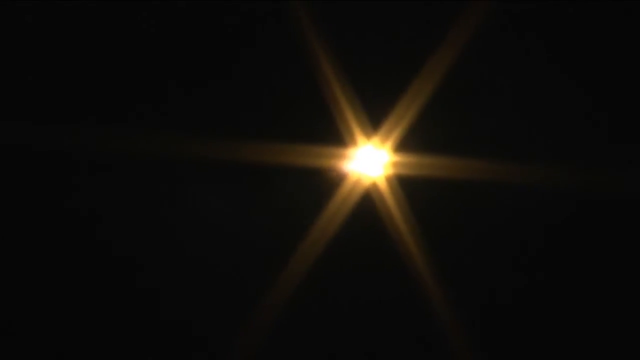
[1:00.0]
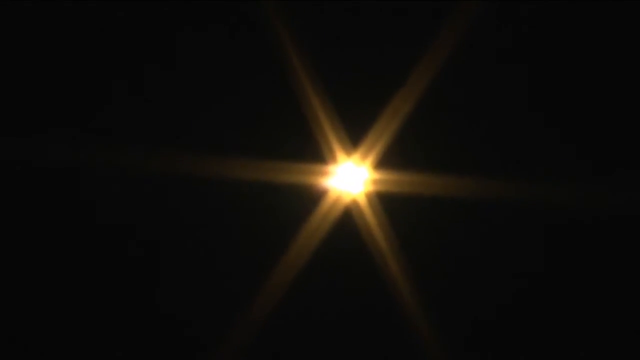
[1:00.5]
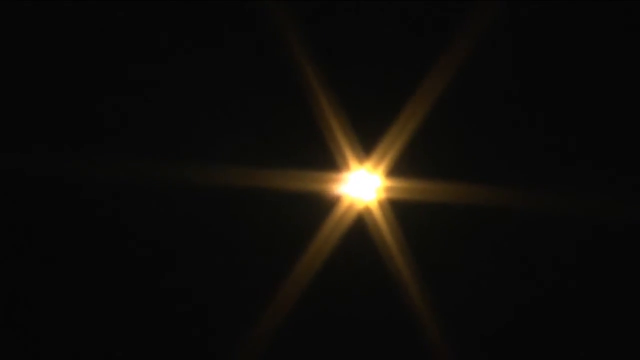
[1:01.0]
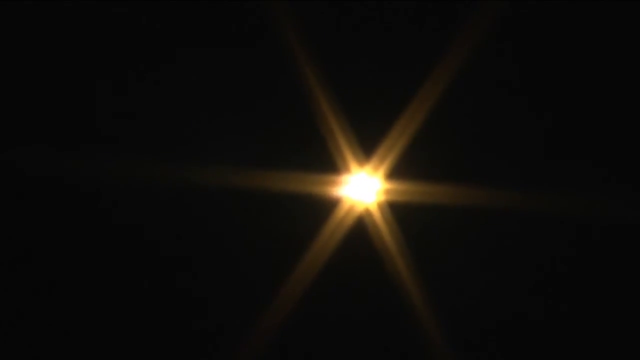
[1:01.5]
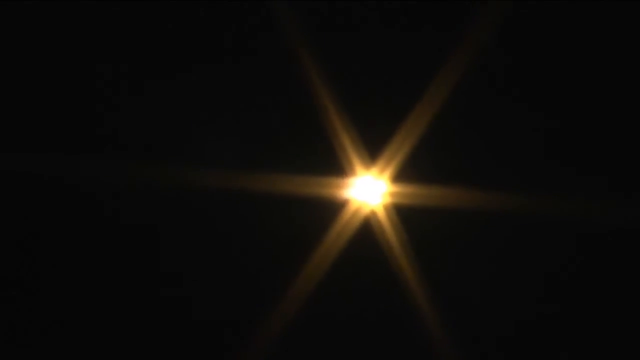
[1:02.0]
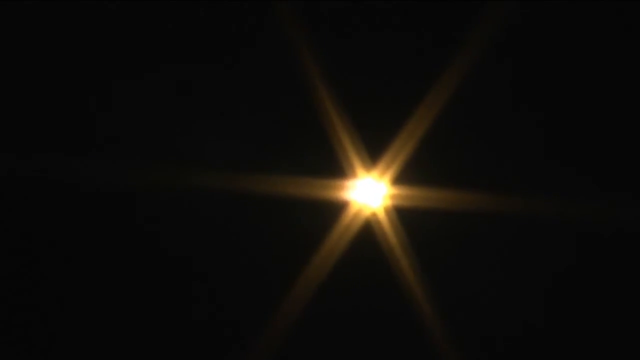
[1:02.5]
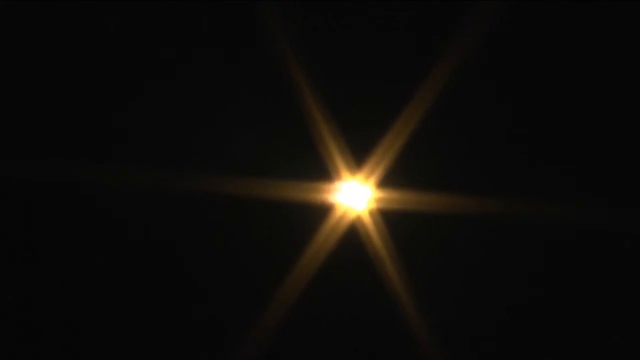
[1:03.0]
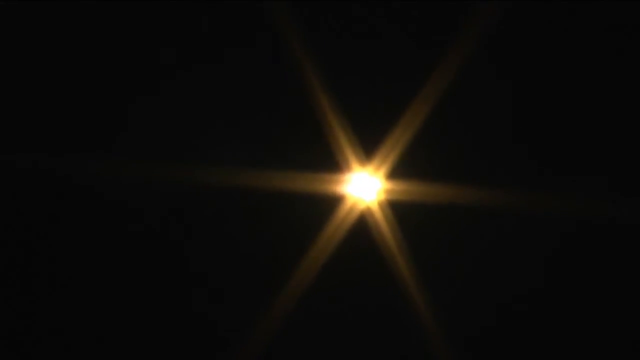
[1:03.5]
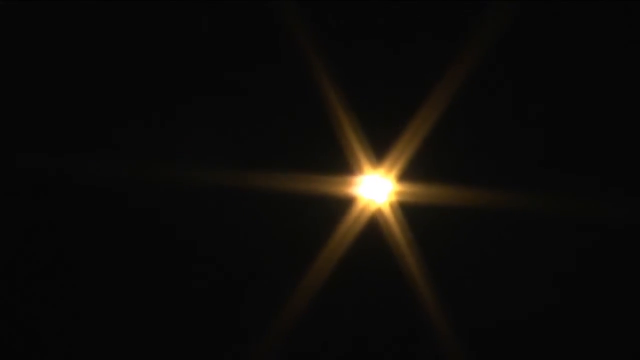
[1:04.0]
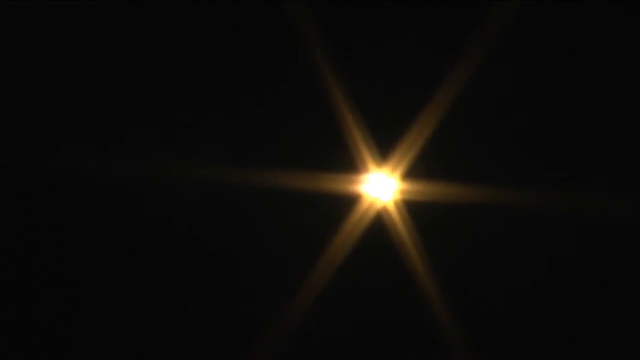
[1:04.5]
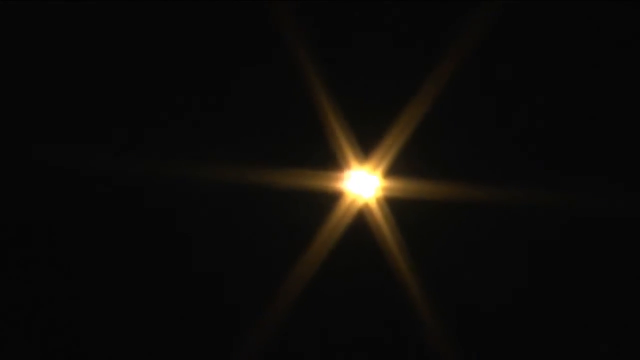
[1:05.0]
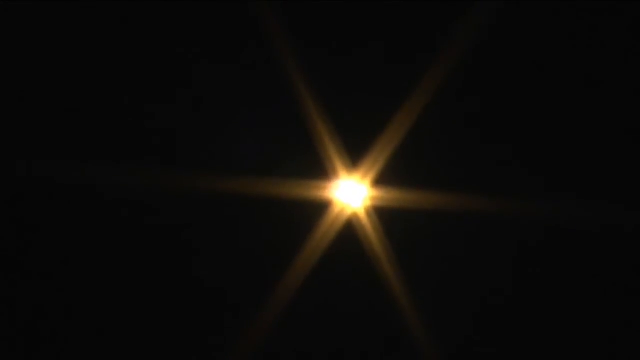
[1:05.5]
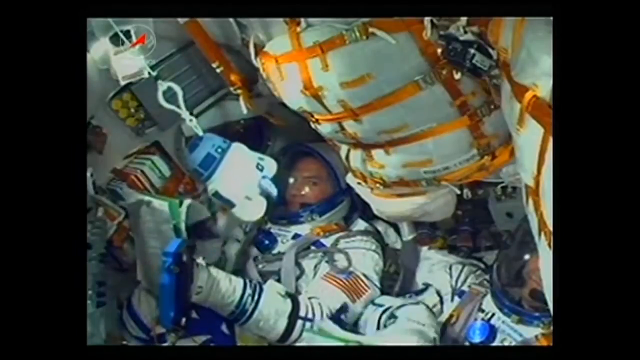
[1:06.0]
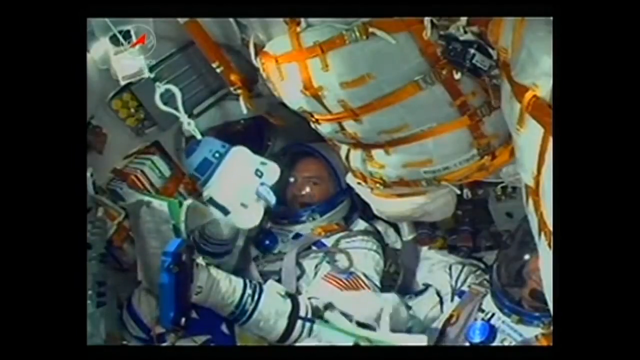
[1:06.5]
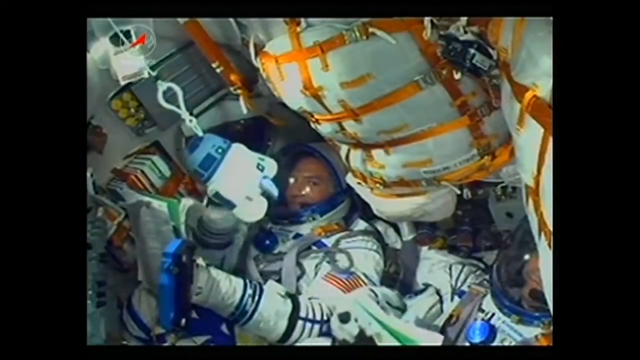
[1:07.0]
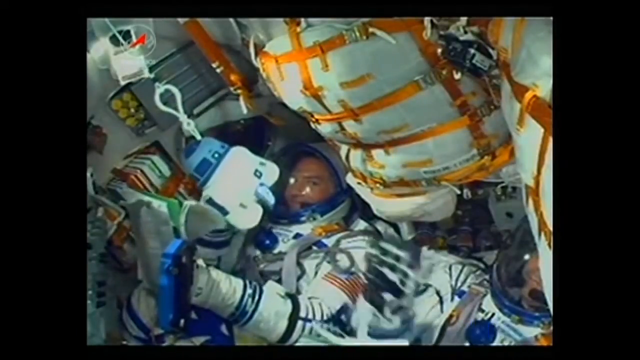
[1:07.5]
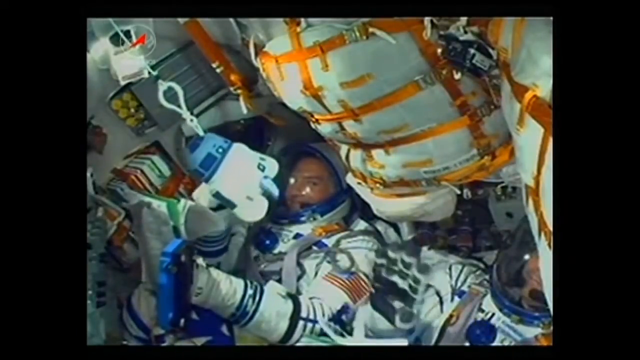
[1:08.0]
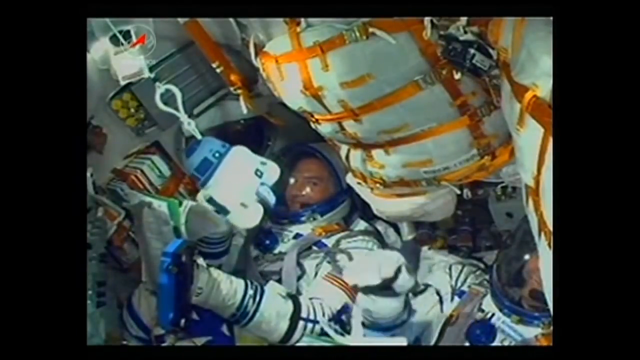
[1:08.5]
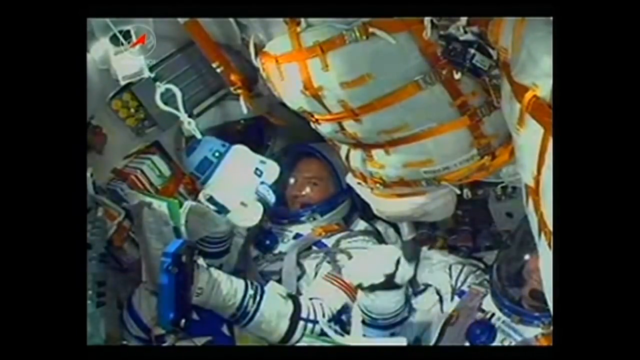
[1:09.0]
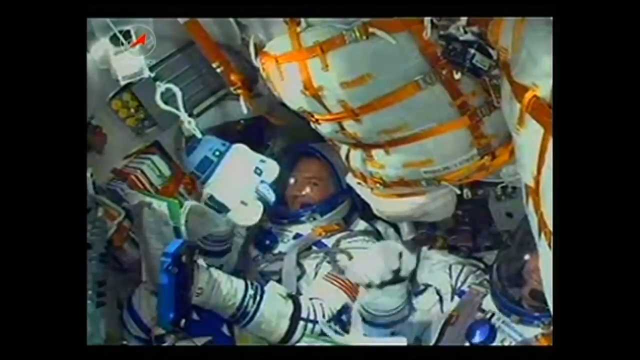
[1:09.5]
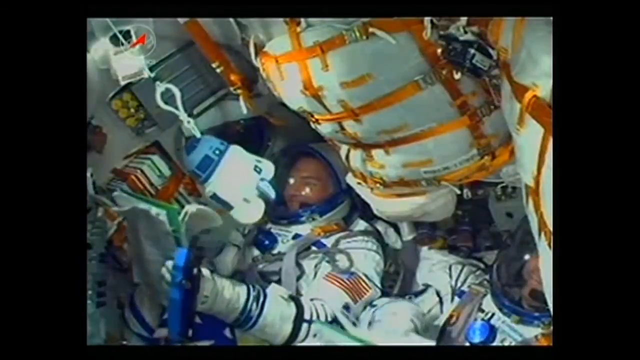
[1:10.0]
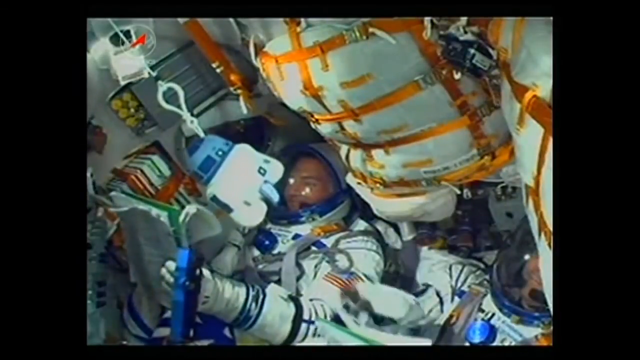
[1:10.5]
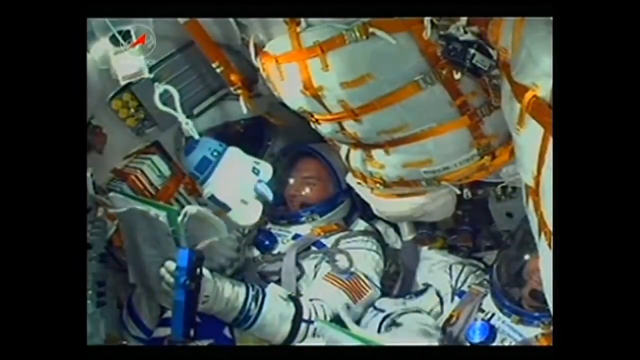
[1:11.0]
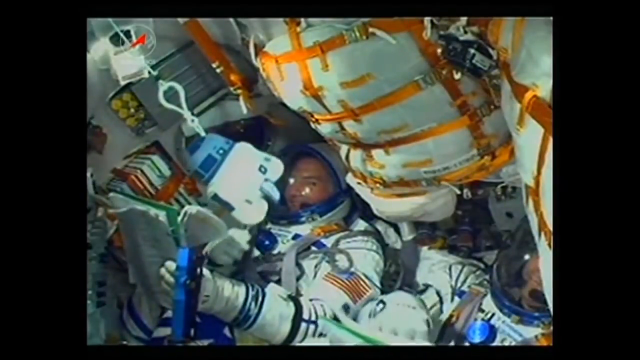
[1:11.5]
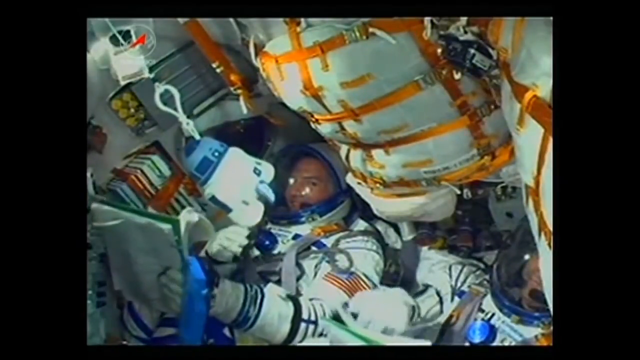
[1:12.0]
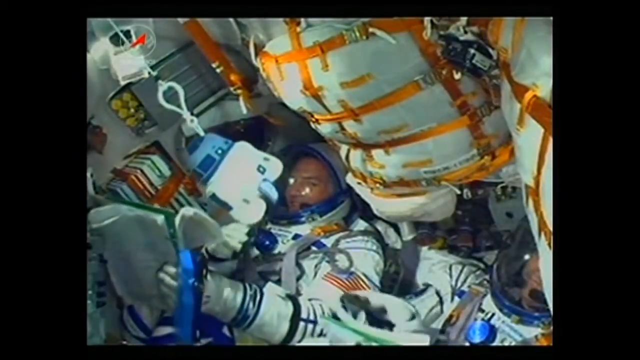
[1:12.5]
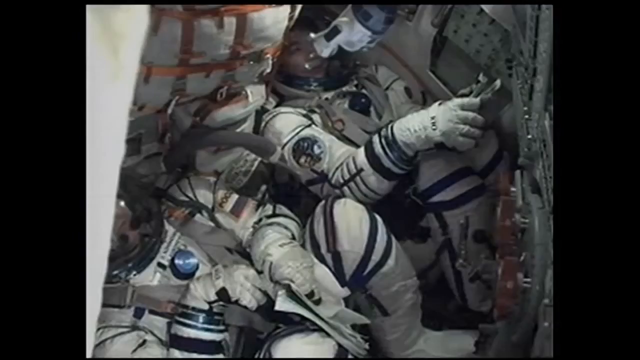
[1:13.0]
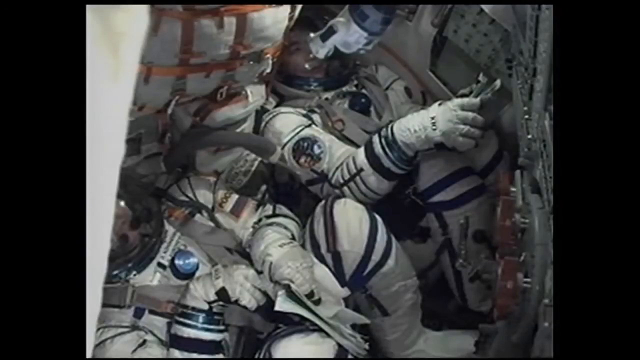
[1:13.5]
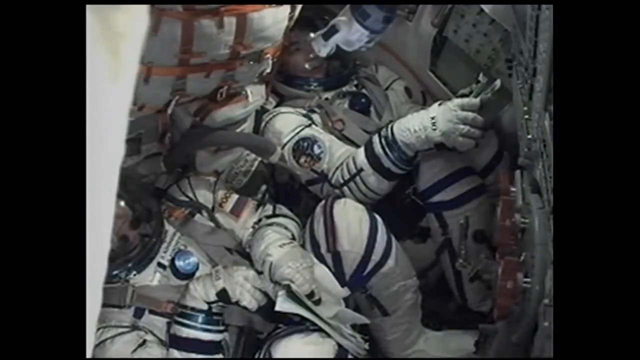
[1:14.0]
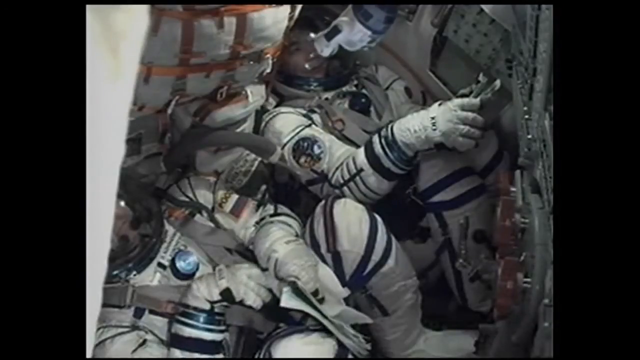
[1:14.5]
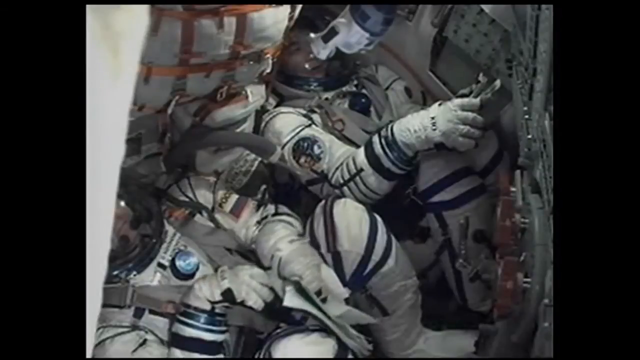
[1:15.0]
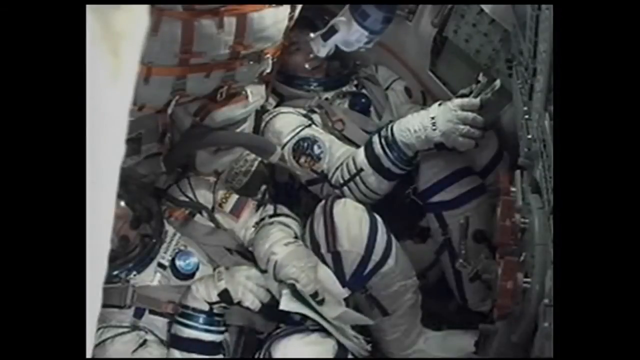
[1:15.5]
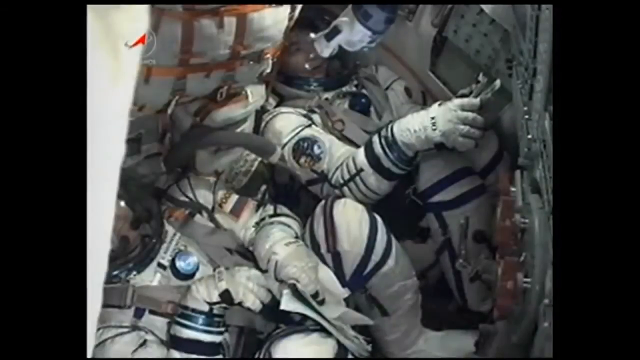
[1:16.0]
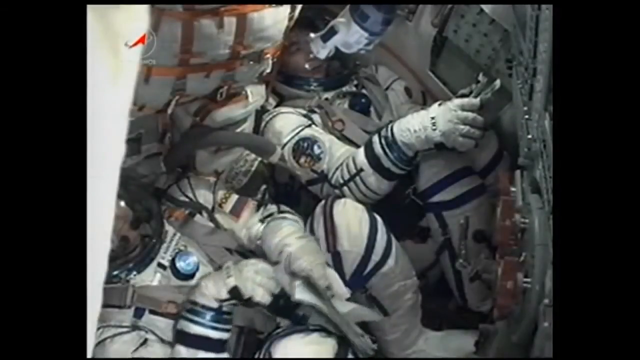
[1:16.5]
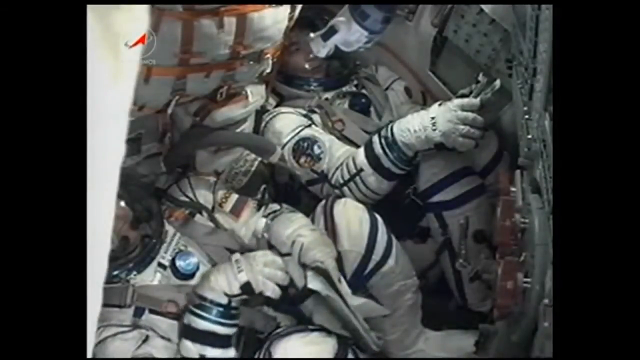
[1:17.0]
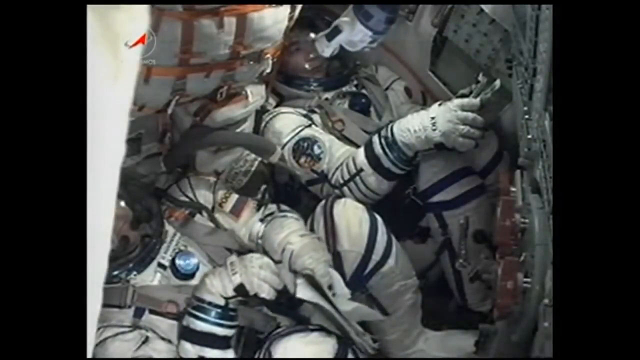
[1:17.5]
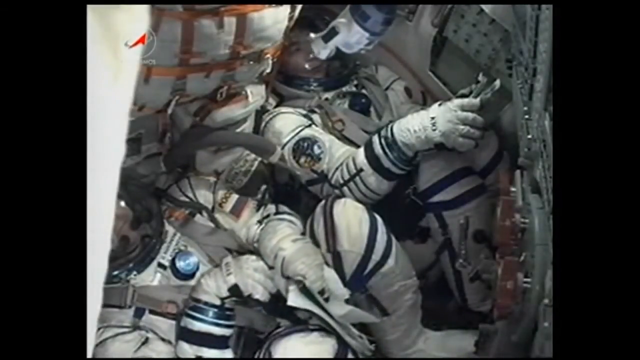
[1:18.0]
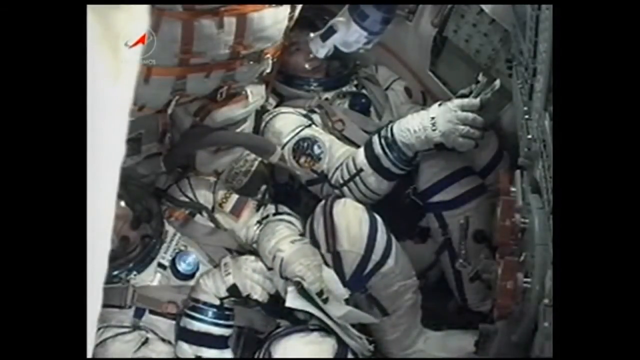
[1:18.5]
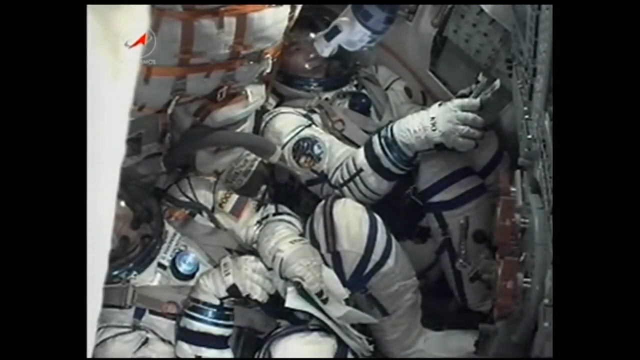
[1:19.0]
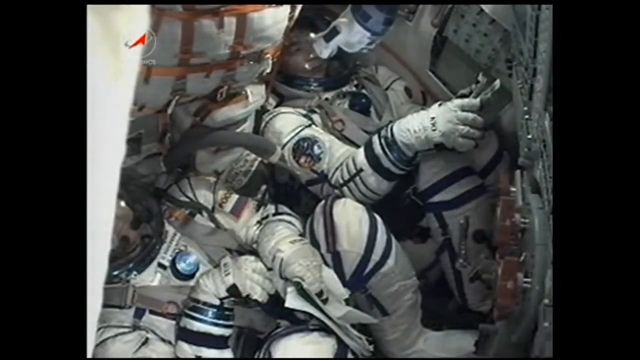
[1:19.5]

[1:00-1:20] A star-like pattern is in the sky against a black background; it is the rocket's booster as the rocket heads into the upper atmosphere. The footage then switches to the inside of the rocket, showing the astronauts. One of them clearly has an American flag on the side of his uniform. All of them wear helmets and full spacesuits, and they look to be harnessed and connected in a very tight space. Two of them are clearly flicking through user manuals in front of them, and various pieces of equipment are held up with guide ropes inside the rocket to keep them from floating away. Initially two men are seated very closely beside one another; the shot then shifts to a slightly different angle showing two men who are possibly different from the first two, as the flag on one man in the second shot seems to be a different flag.